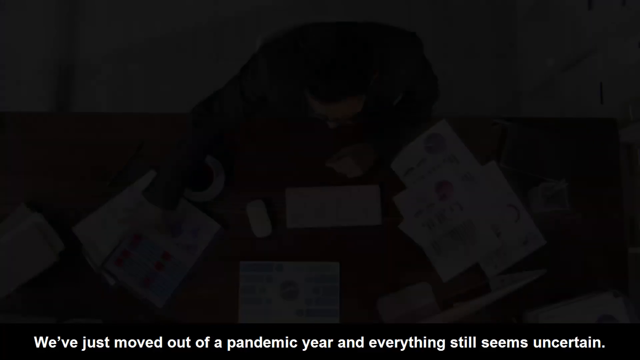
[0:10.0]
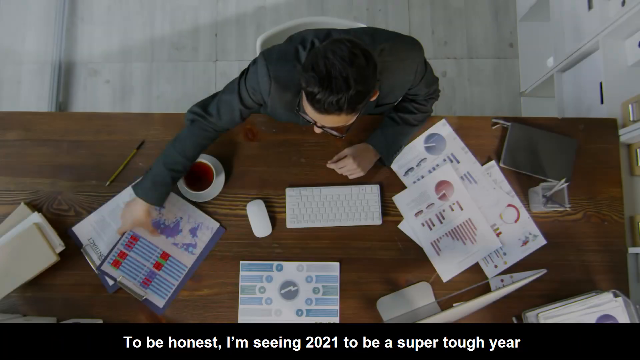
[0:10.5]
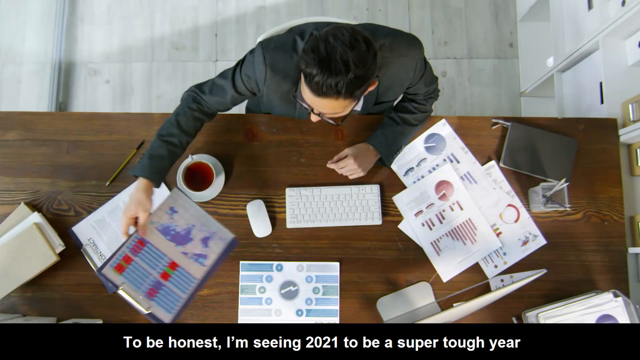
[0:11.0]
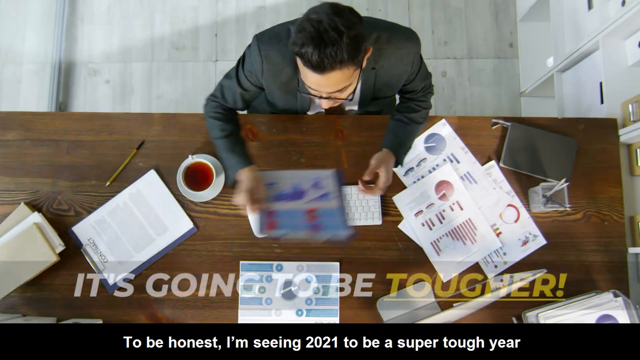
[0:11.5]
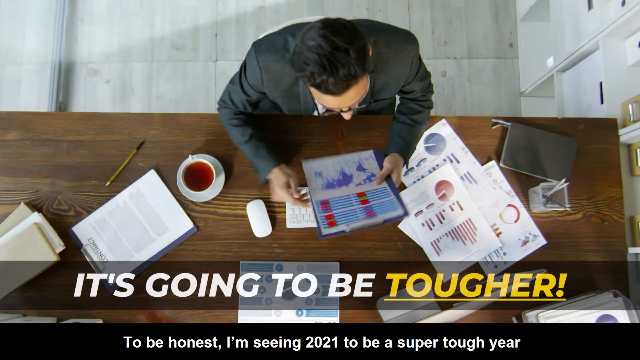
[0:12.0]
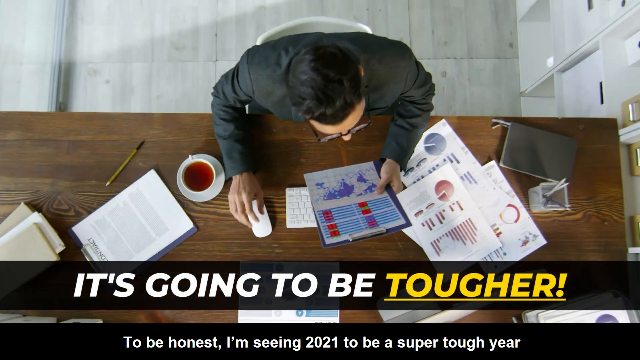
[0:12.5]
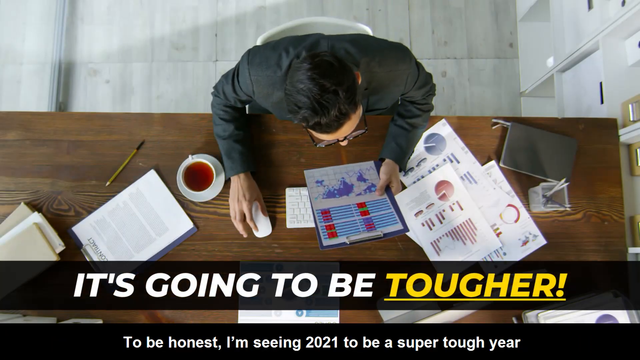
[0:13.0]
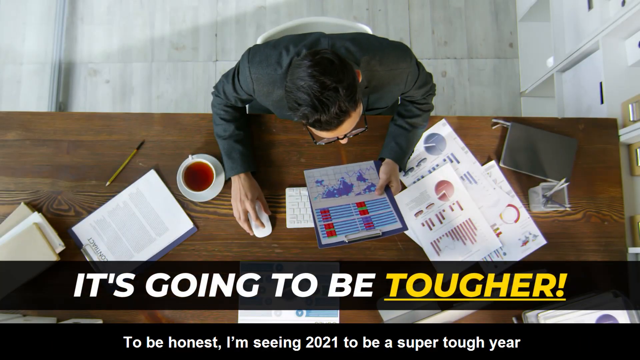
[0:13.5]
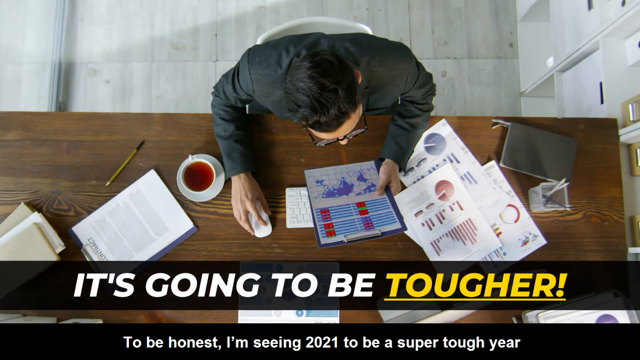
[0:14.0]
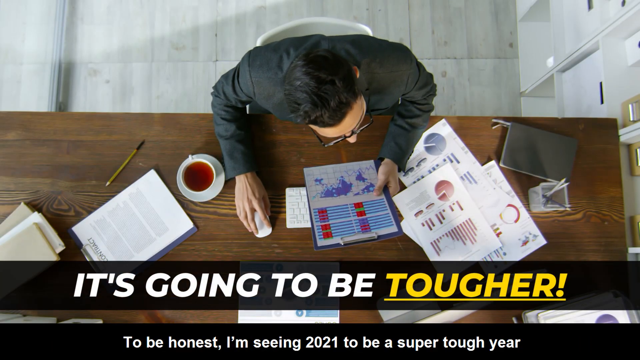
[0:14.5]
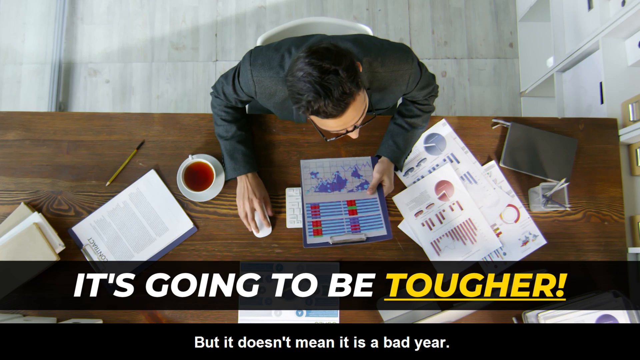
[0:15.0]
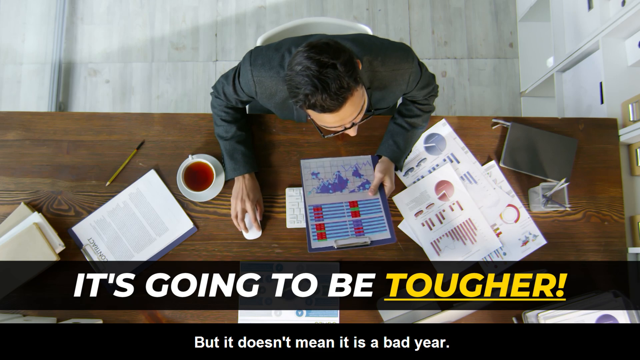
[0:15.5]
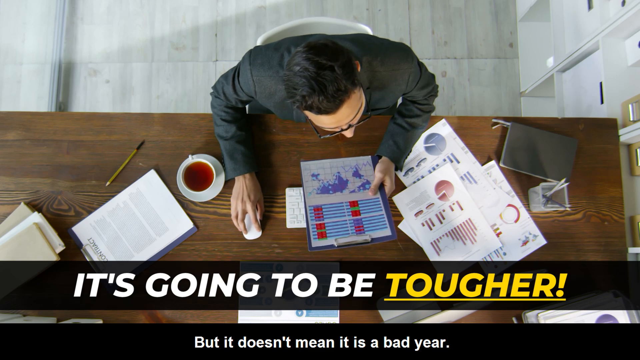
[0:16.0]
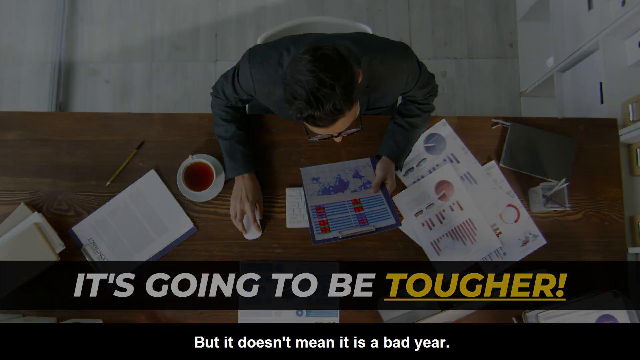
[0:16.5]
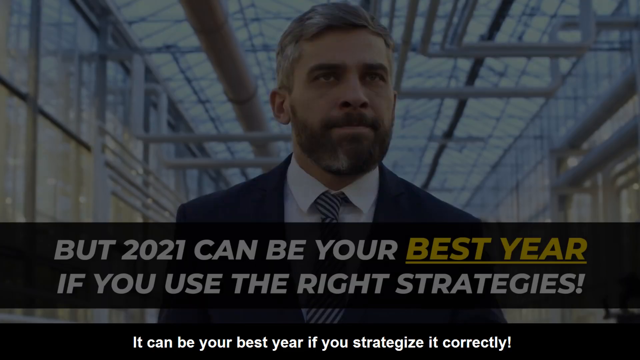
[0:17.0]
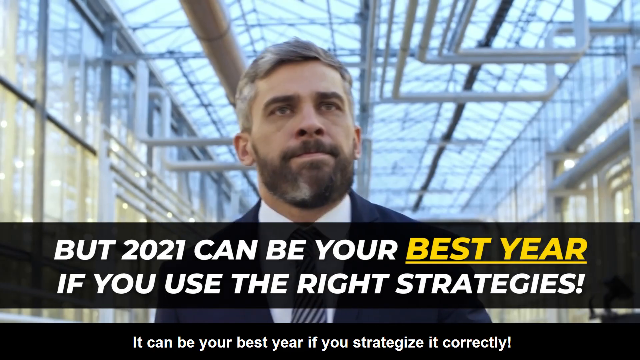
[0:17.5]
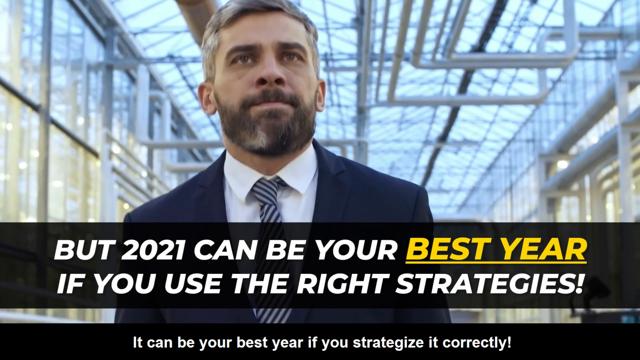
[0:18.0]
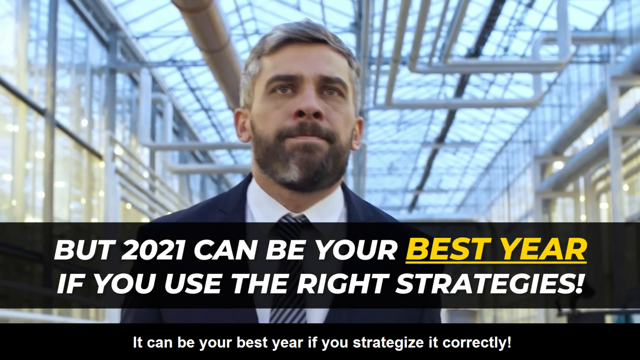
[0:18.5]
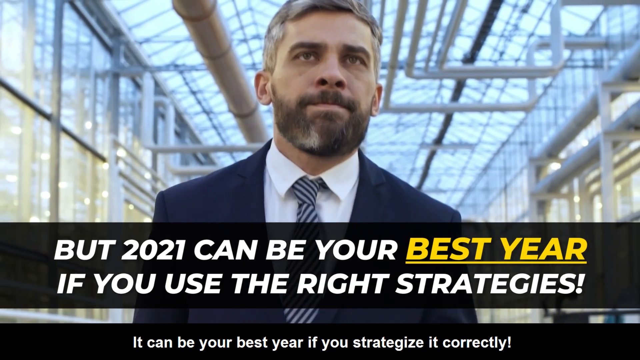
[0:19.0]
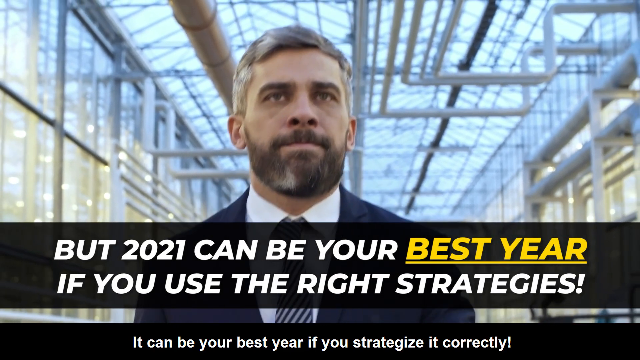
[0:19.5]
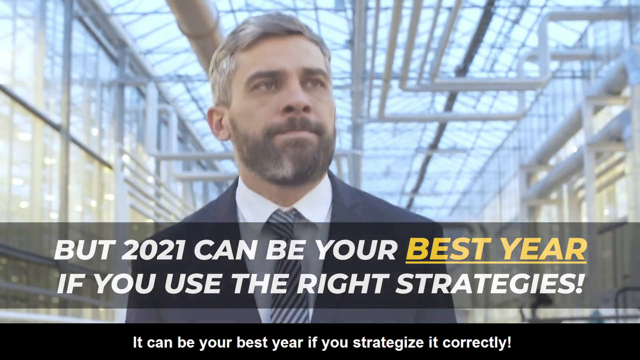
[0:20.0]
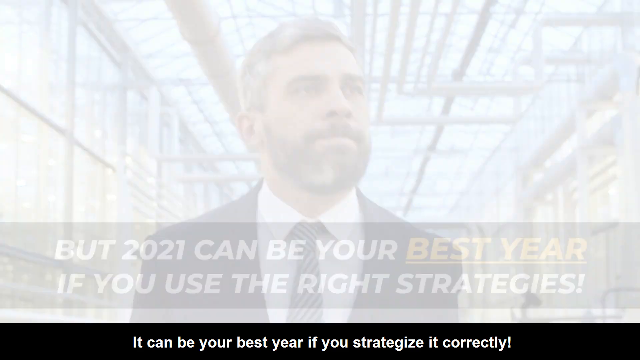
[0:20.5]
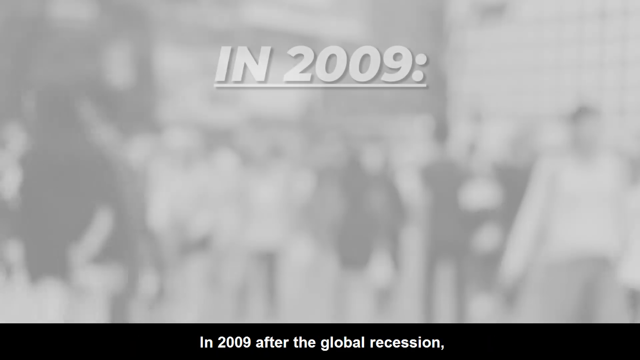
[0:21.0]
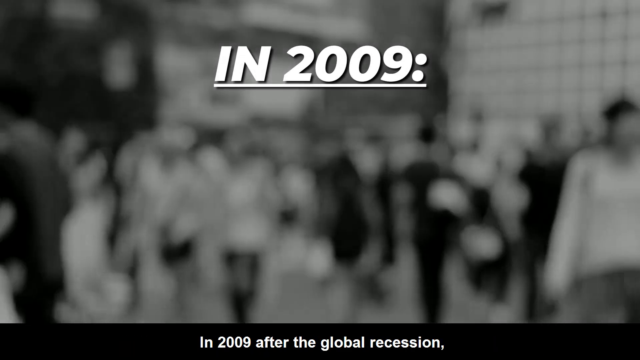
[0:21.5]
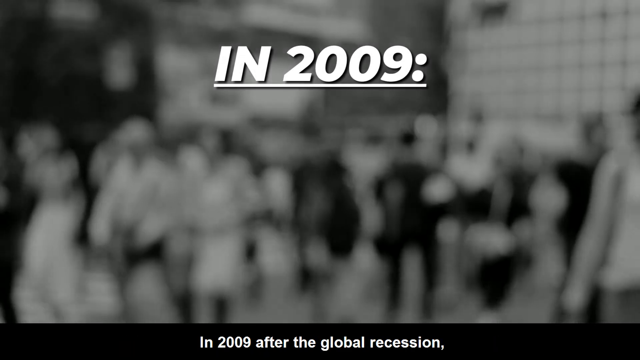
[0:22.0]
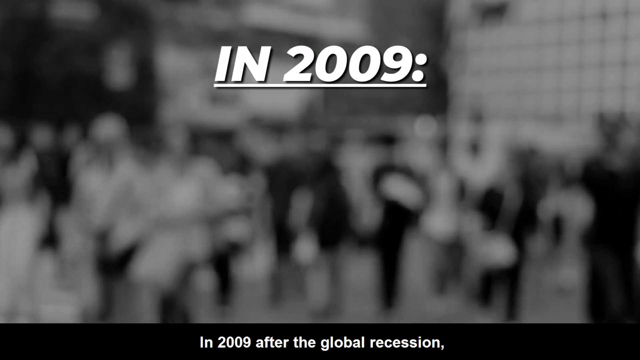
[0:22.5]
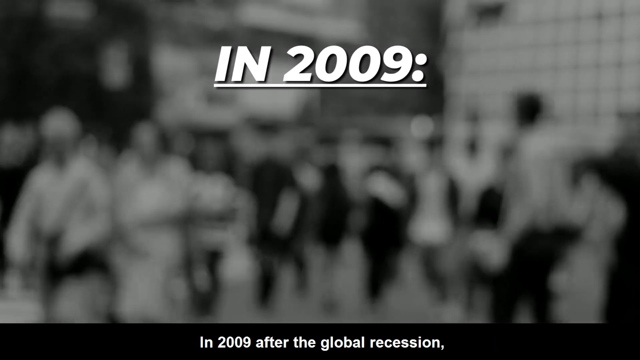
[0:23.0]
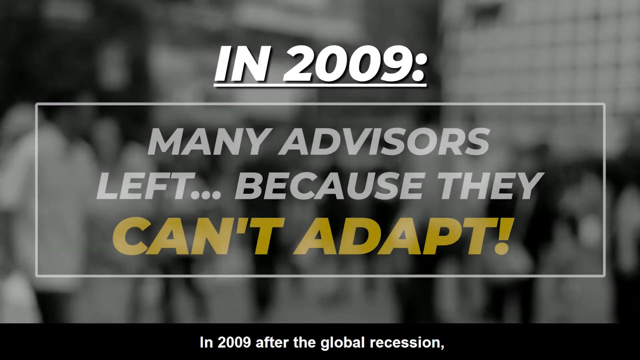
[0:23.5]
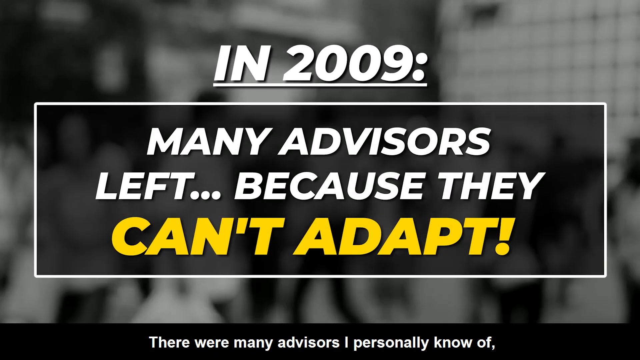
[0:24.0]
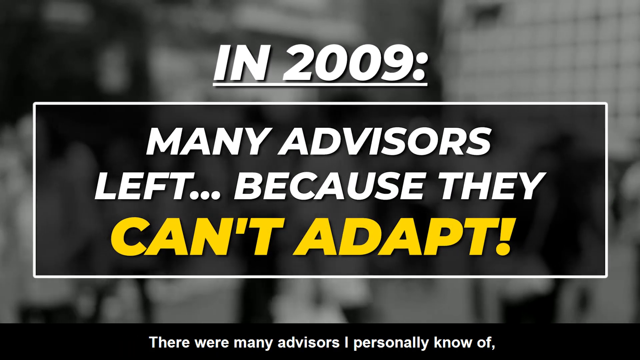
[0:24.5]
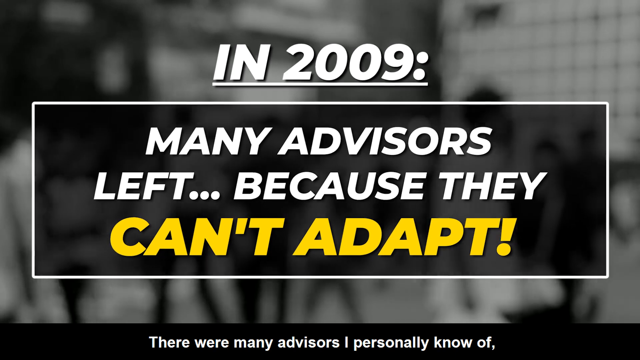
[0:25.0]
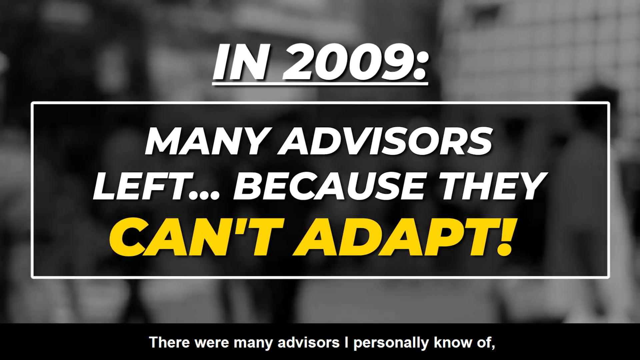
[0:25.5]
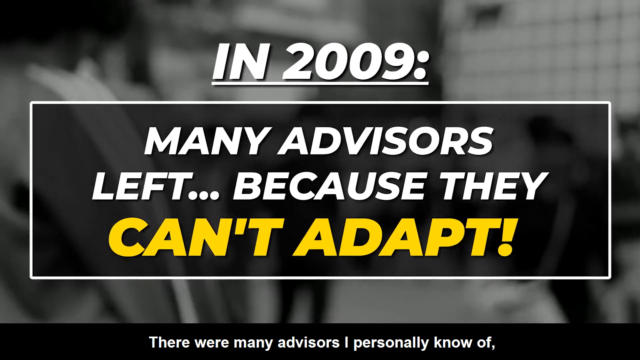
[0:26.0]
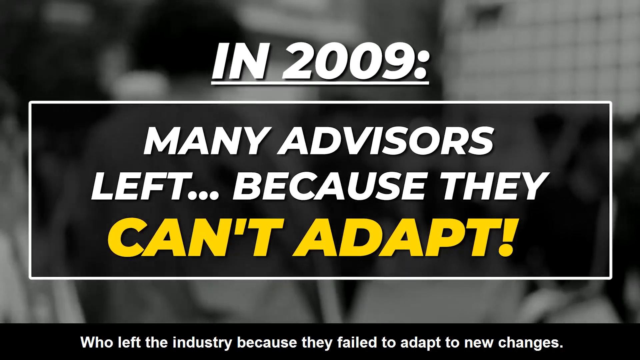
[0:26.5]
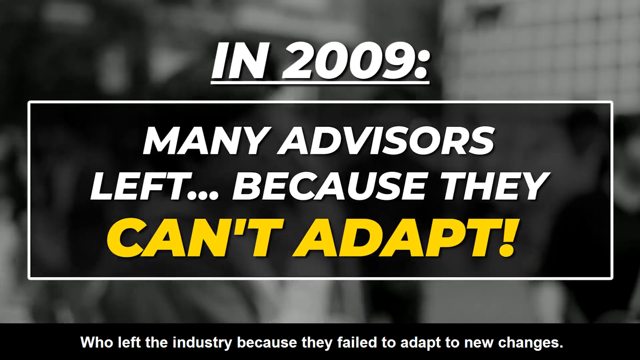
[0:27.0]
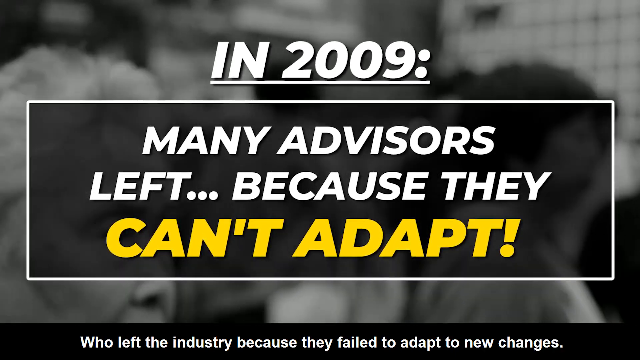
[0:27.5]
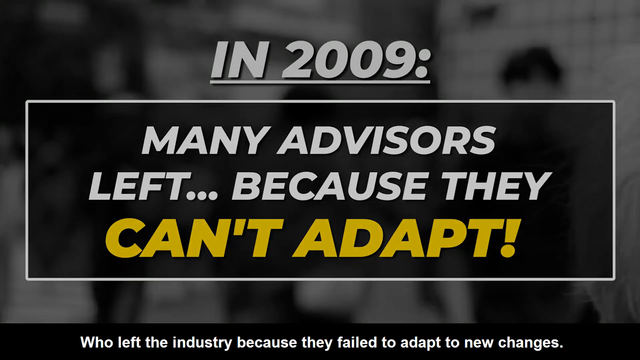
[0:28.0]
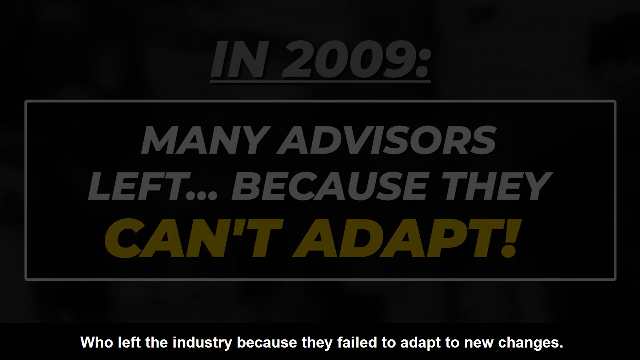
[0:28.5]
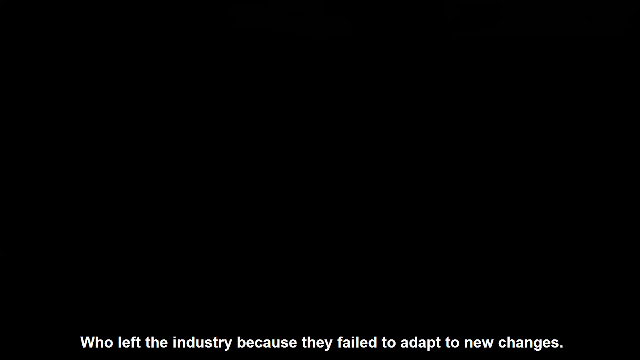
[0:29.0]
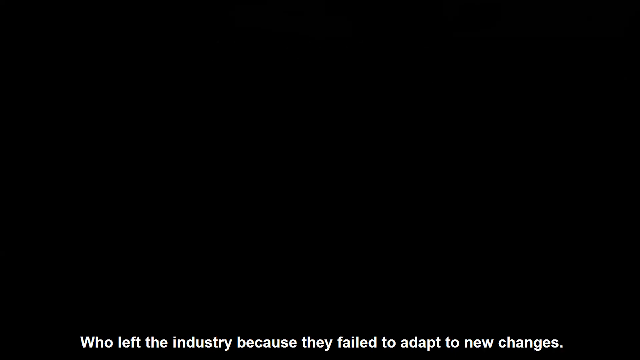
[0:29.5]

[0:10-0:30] A man sits at a desk, with the camera seemingly positioned above him. He has black hair, wears glasses, and appears to be wearing a suit. There are multiple items on the desk, apparently a lot of paperwork. He picks up a pamphlet of some type in his right hand and seems to be holding a computer mouse. The caption reads "it's going to be tougher." The scene changes to a man with salt-and-pepper hair and a dark beard and mustache walking down a hallway, with the caption "but 2021 can be your best year if you use the right strategies." Next comes a black-and-white video of multiple people walking, with the text "in 2009 many advisors left because they can't adapt."